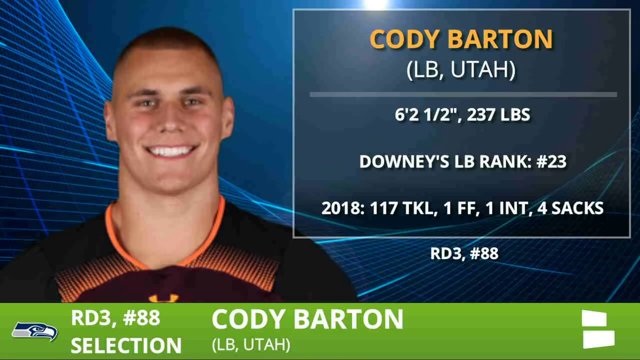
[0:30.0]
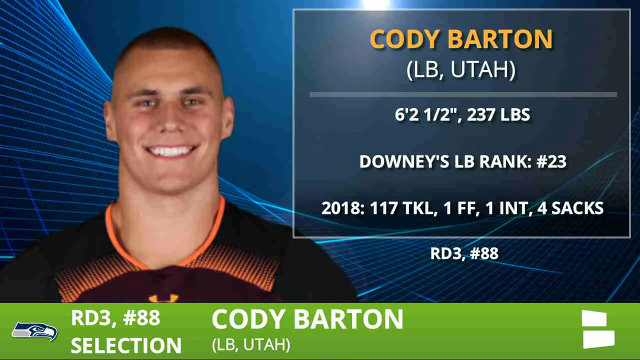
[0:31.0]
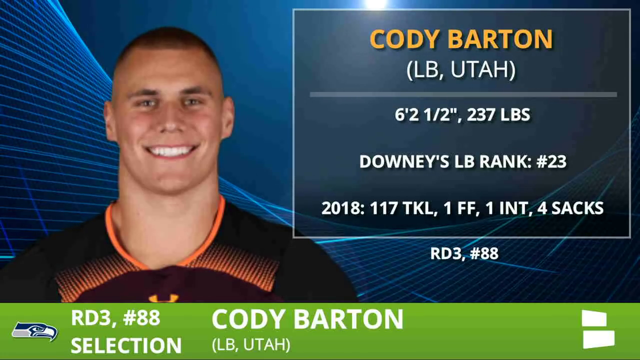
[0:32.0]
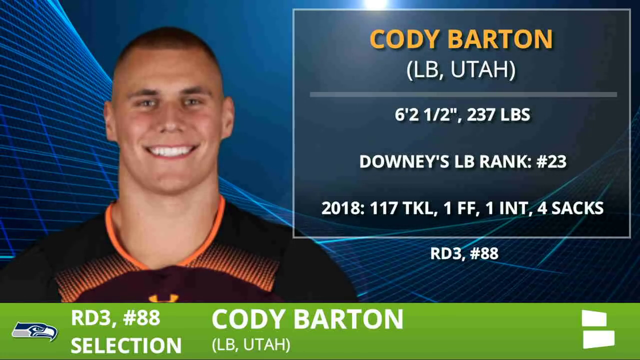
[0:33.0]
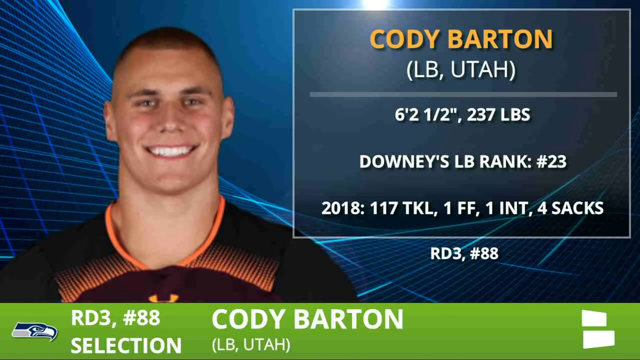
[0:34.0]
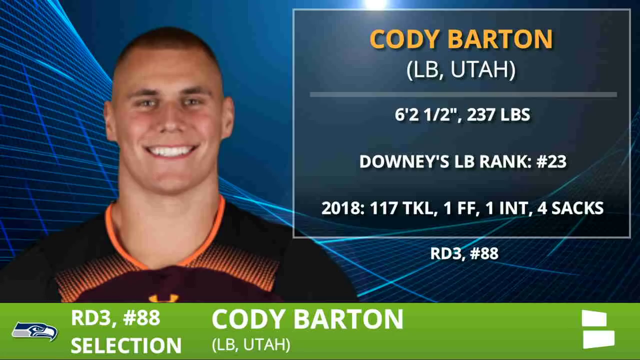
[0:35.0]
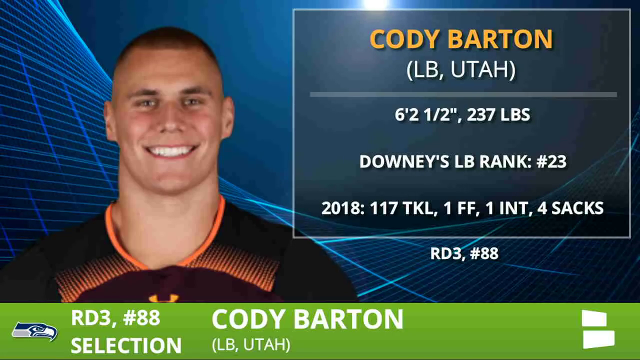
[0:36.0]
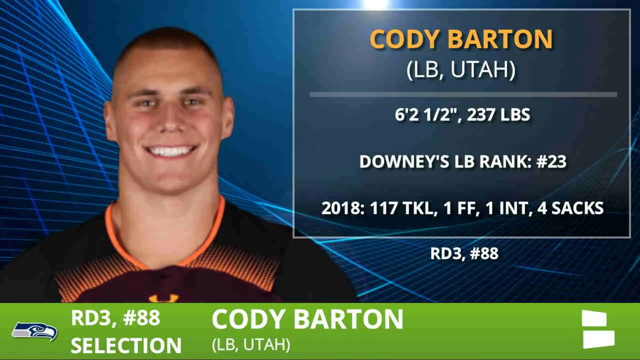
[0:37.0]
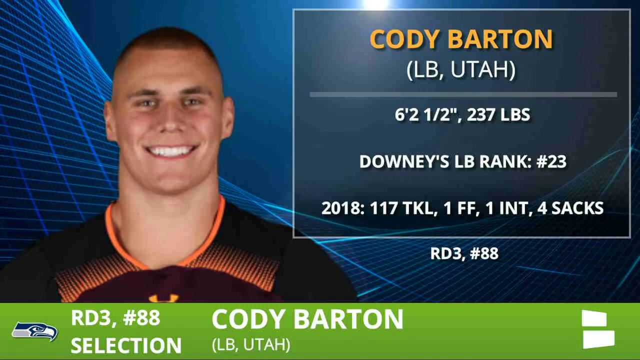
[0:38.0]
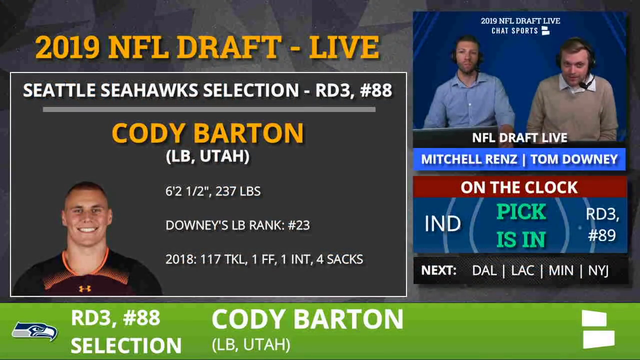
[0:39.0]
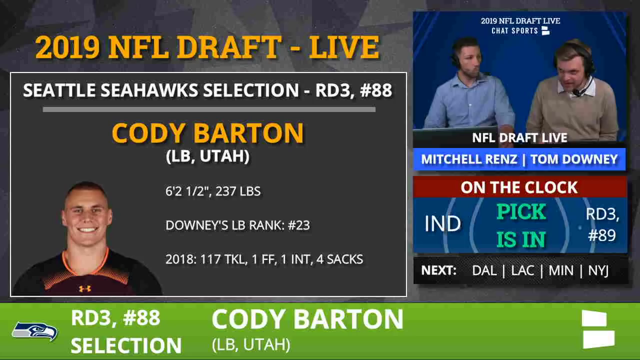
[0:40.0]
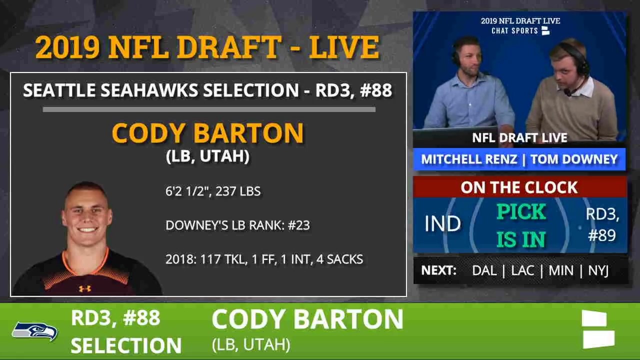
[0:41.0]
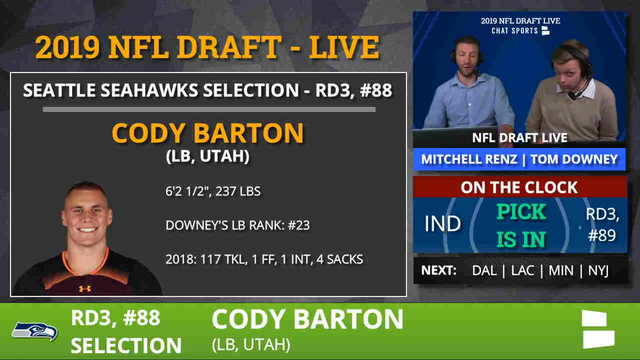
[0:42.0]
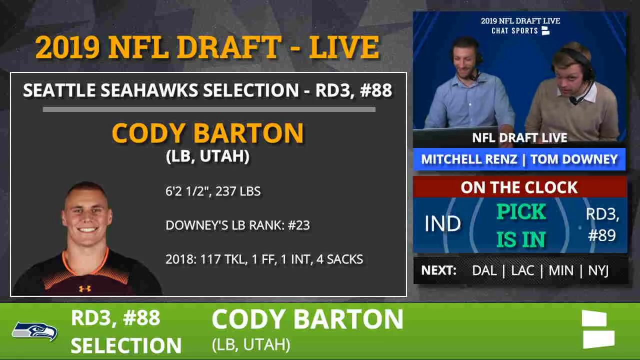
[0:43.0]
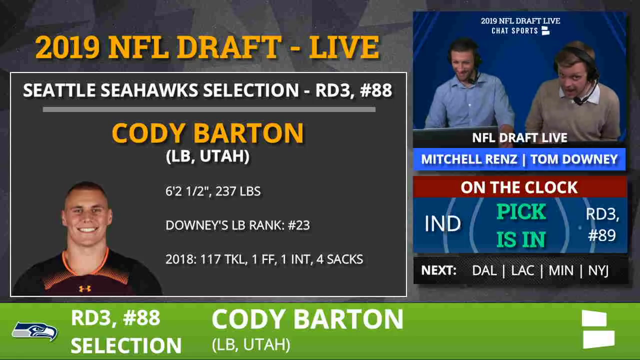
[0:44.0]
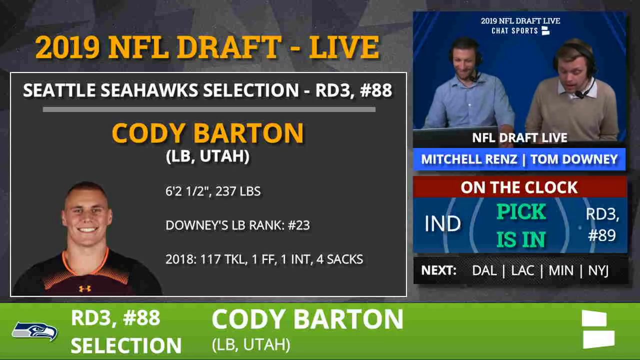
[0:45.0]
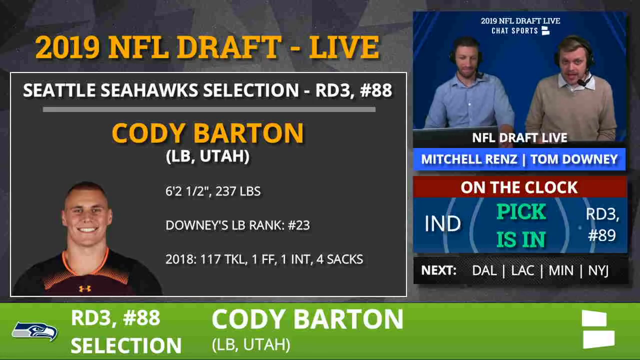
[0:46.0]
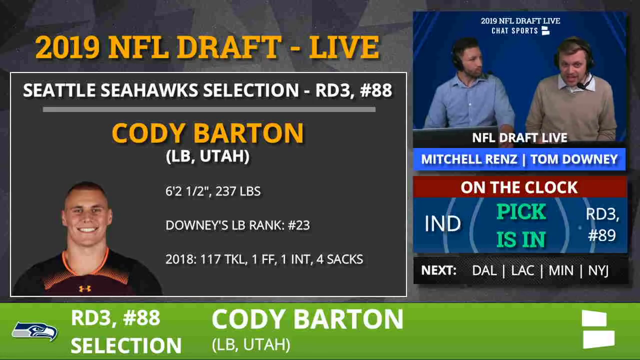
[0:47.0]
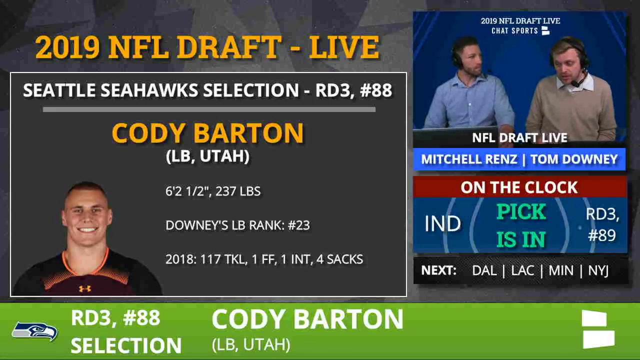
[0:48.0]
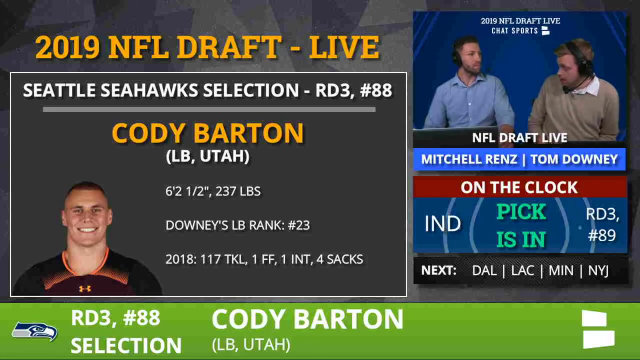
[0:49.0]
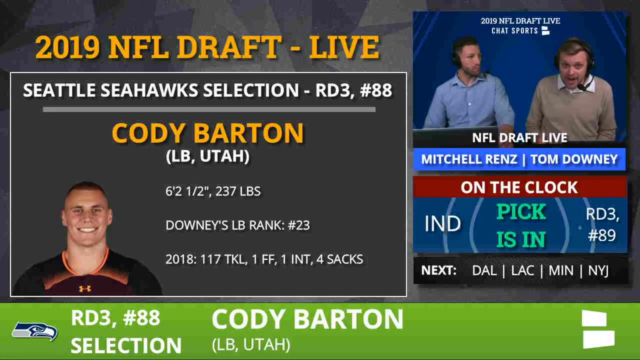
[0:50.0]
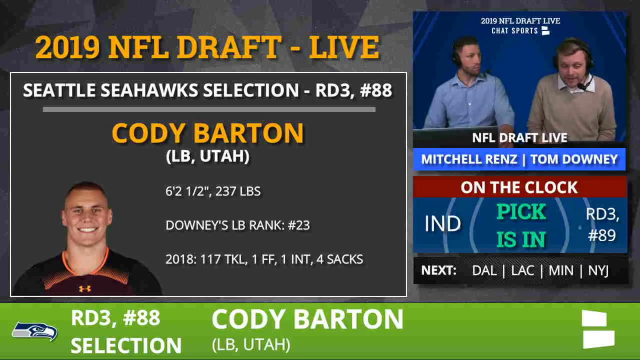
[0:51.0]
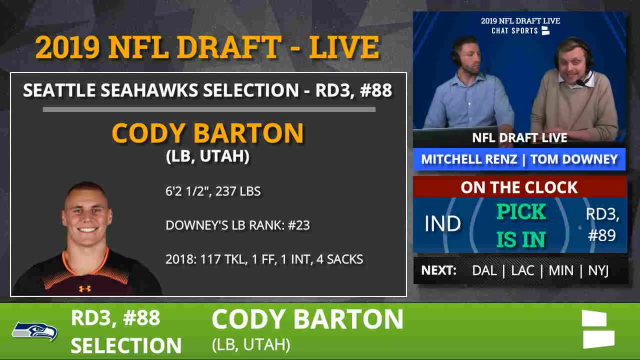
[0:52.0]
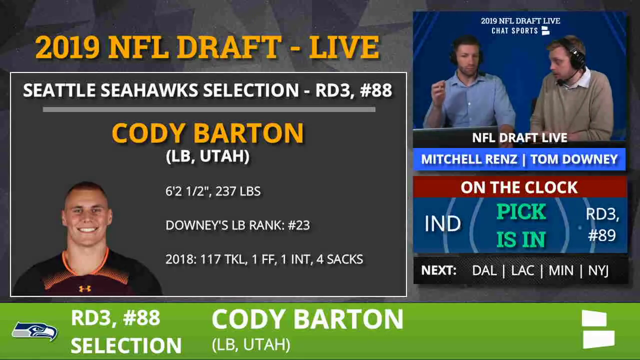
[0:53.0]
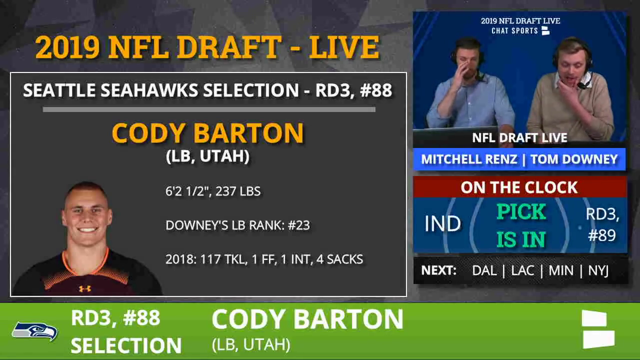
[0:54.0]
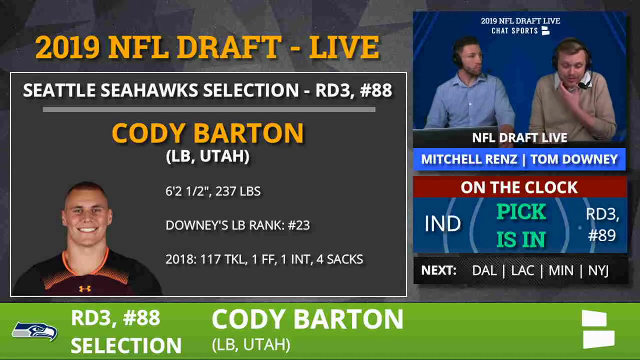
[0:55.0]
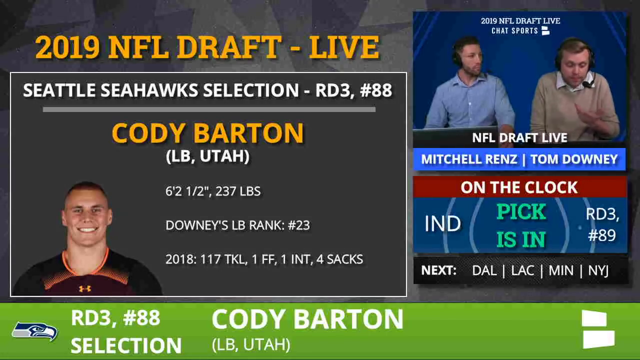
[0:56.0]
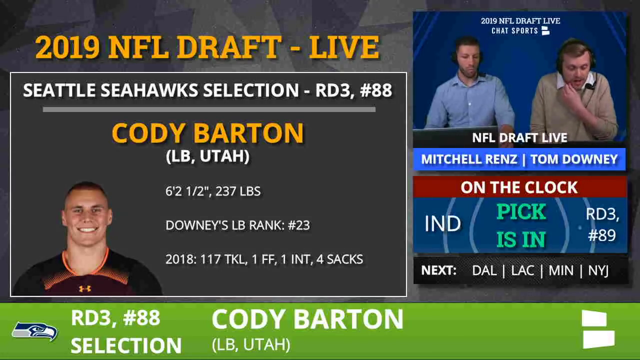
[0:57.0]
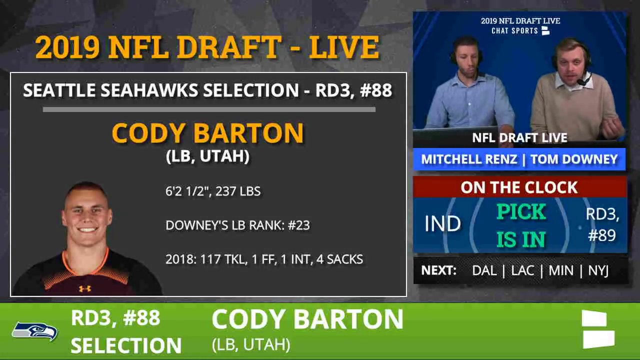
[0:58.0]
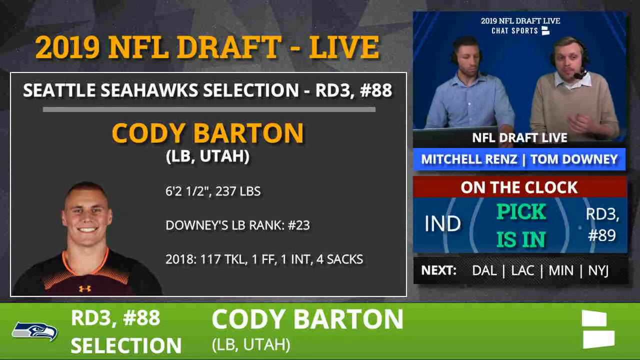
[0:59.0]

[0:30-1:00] A still image on the left shows a man with short shaved hair and a big smile, looking straight at the viewer. He wears what looks like a black jersey, orange around the collar; directly below the collar, on the top of the chest, it looks mauve, and above that are some sort of orange vertical line patterns bleeding into black. Statistics about Cody are on the right of the screen. The video then cuts back to the main layout, with the two presenters talking live in the top right corner. The main box on the left shows the same details: "Cody Barton" in capitalized yellow text, "LB, Utah", his stats below, and a small photo of him, the same photo seen before. The presenter on the right, identified by the text as Tom Downey, leans forward as he talks, head bent forward, his eyes occasionally moving to the camera. He turns his head to his right, looking directly at his co-host, then moves his body to the right; his left arm appears as he places it on the desk in front of him, bent at the elbow. His co-host moves his right hand up to touch his face. Tom then lifts his arm from the desk, still bent at the elbow, bringing his left arm across his body to touch the right side of his face, before moving it down and around.